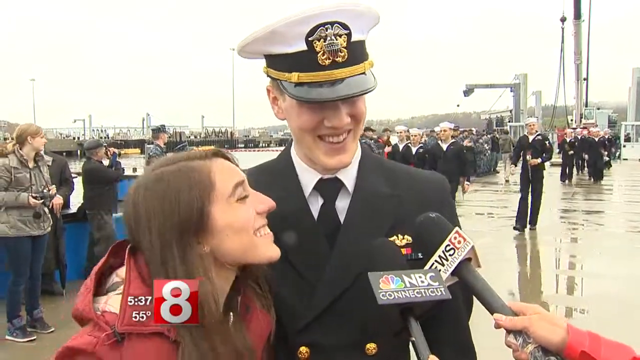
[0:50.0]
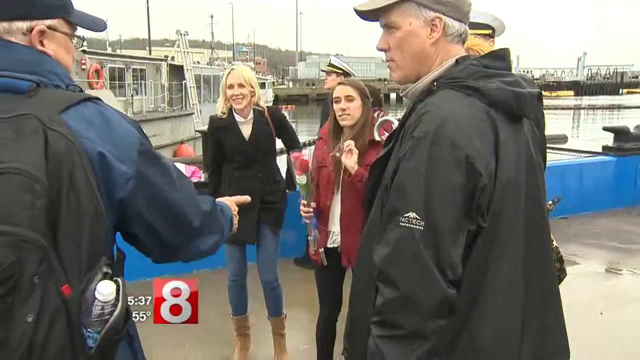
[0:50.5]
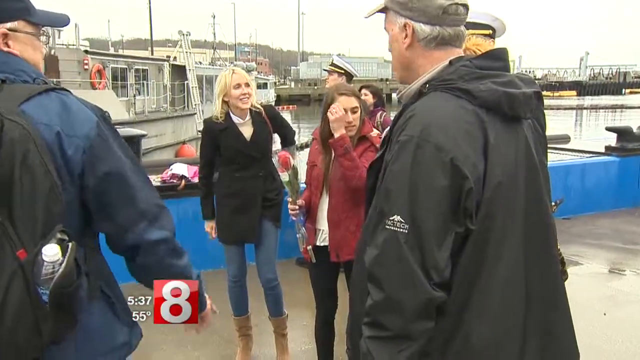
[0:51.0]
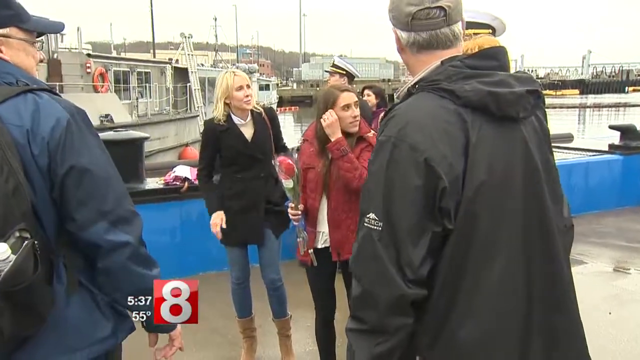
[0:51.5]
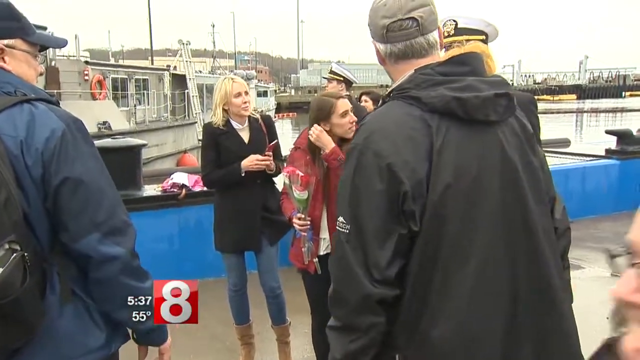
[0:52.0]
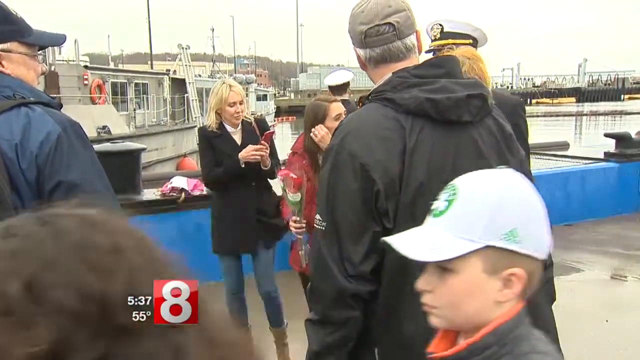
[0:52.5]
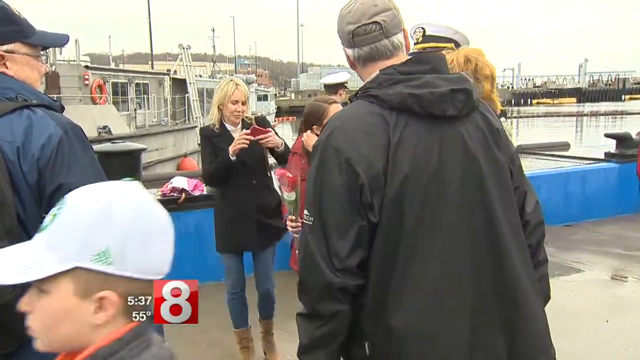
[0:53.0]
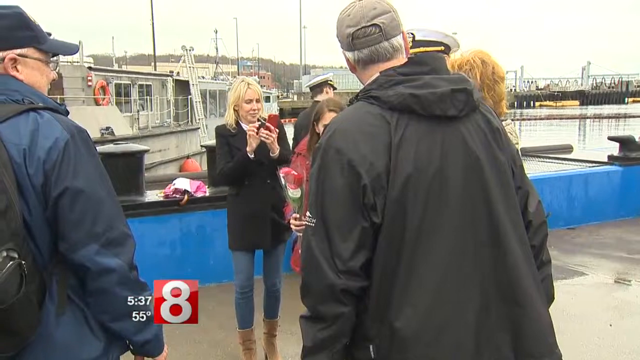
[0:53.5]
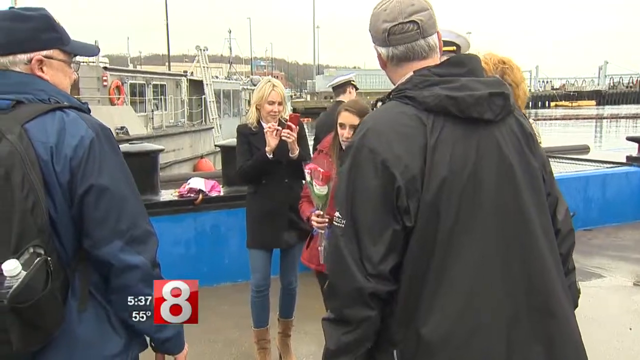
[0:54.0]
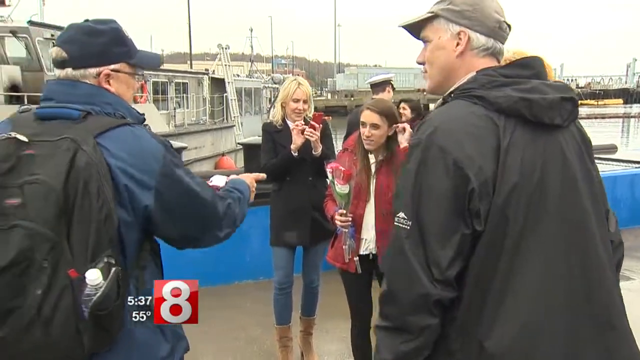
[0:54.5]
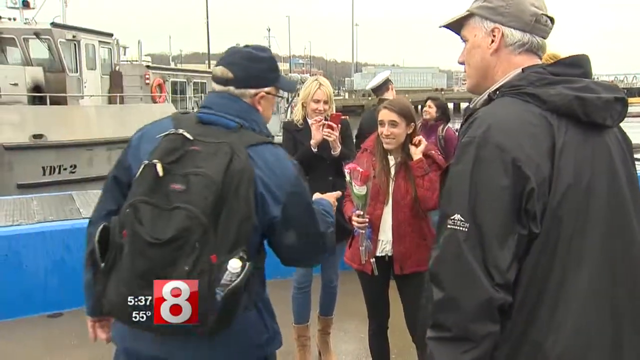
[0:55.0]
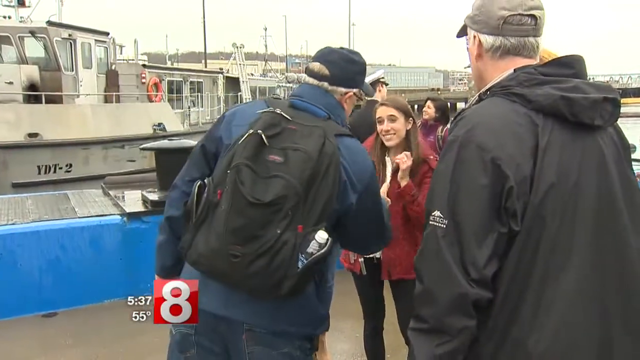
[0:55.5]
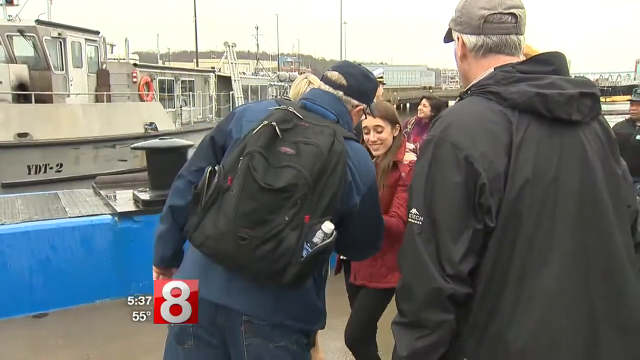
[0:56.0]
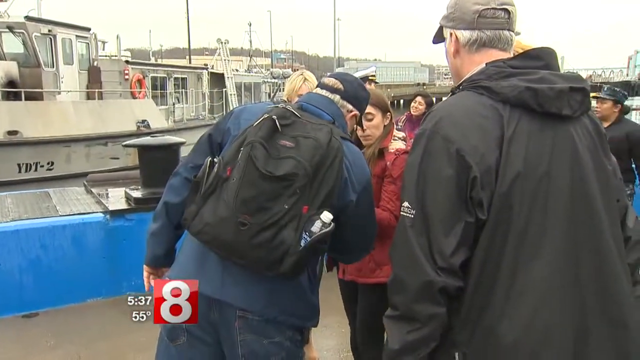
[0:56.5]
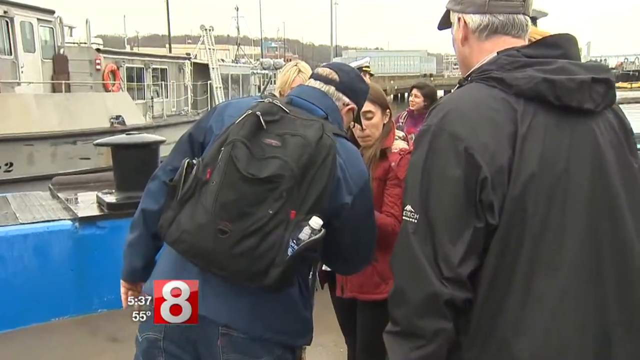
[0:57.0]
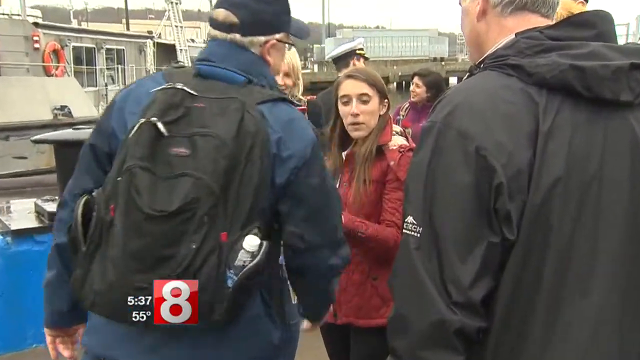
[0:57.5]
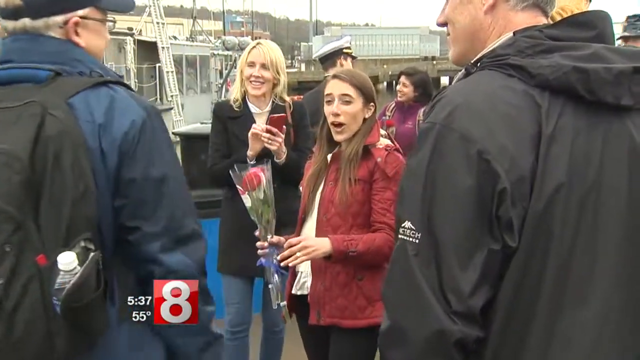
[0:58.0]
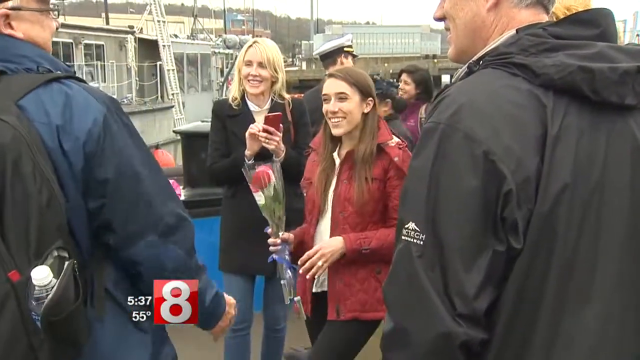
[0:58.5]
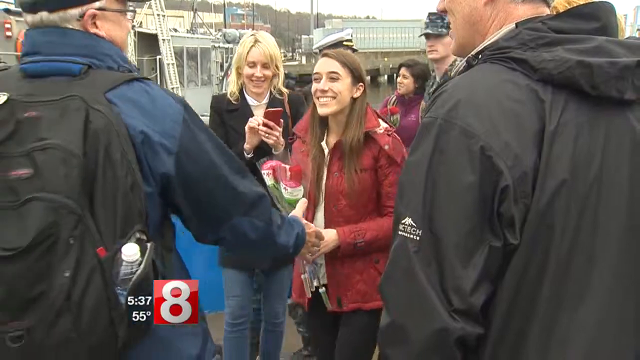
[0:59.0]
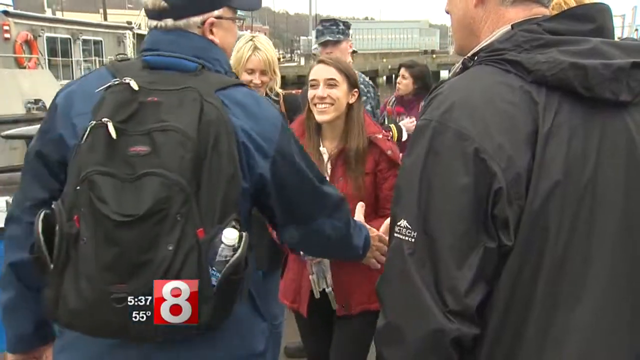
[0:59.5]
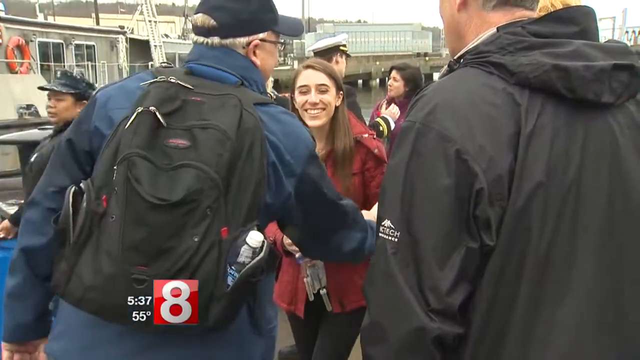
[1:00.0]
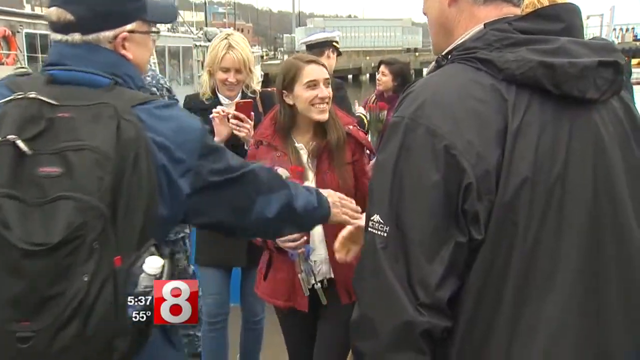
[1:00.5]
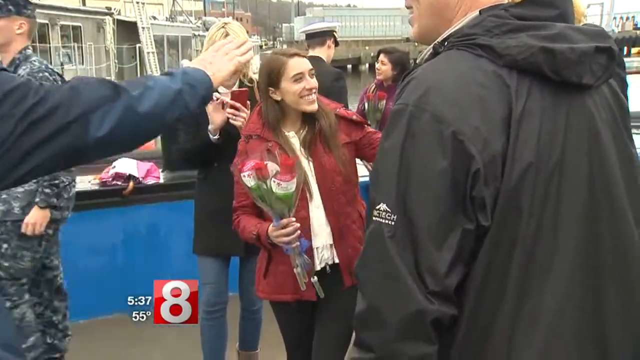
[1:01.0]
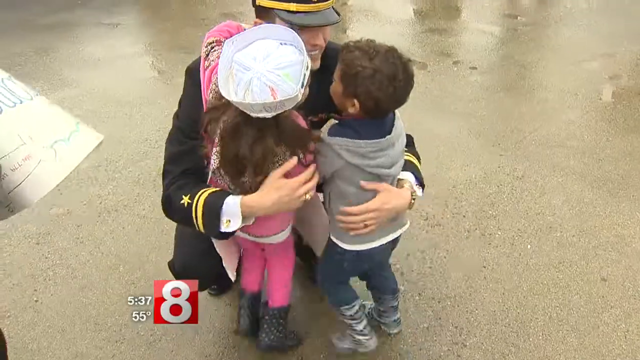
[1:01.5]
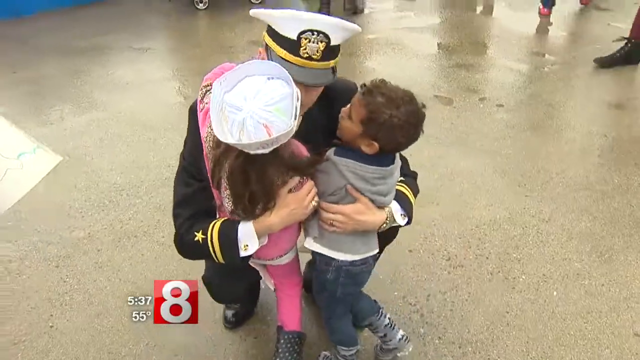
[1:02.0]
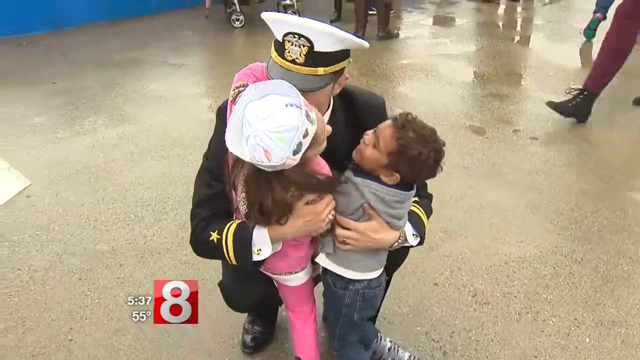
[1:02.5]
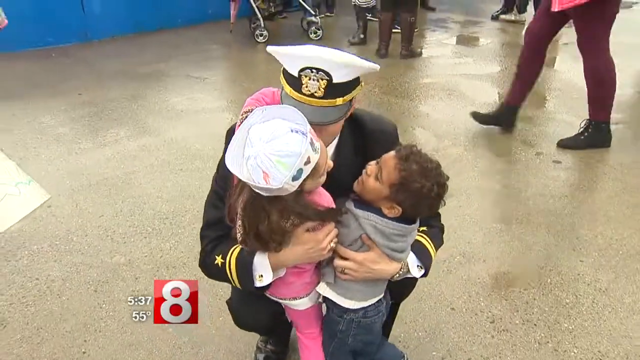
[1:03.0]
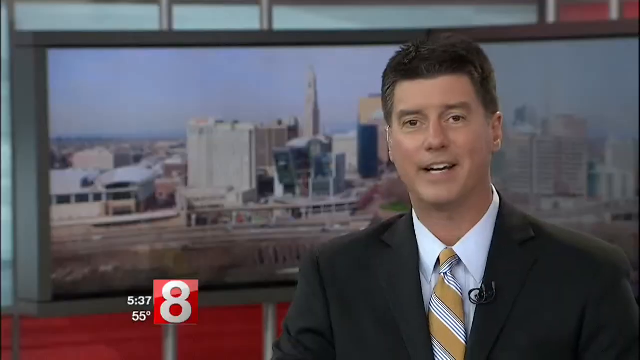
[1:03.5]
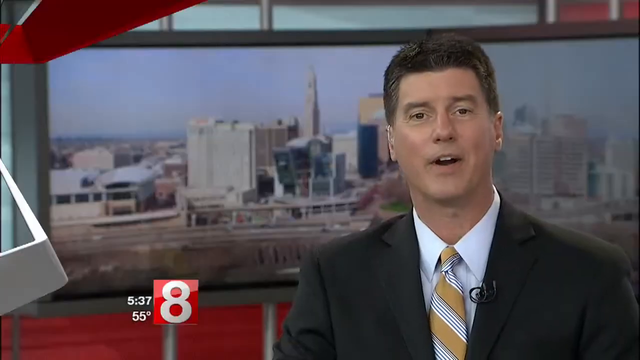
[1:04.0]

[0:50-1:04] In another shot, the woman of the officer couple, in the red jacket, holds a long-stem red rose. A man with a black backpack and a blue winter or fall coat goes forward to her; it looks as if he is checking out her ring, maybe an engagement ring or her wedding ring. Next, the officer kneels down hugging two toddlers, presumably his children. The camera quickly cuts back to the newsroom, where a white man wears a black suit, a white dress shirt, and a tie with mustard and white stripes.